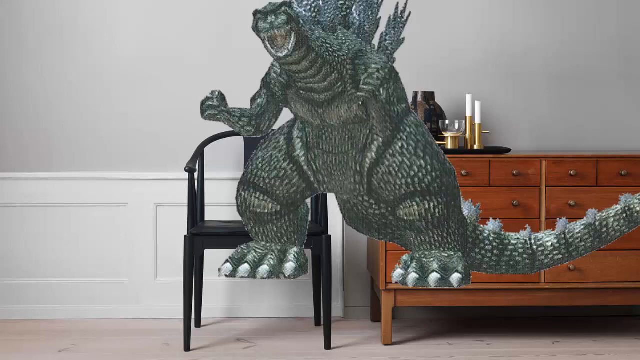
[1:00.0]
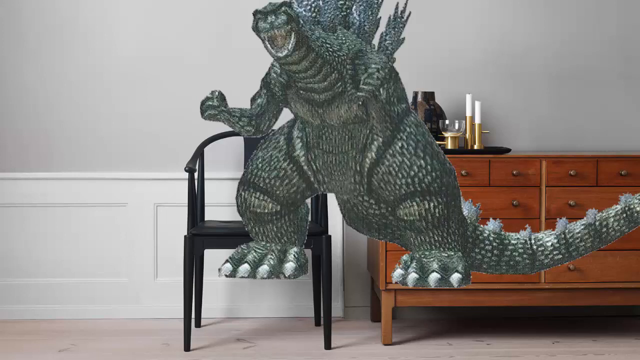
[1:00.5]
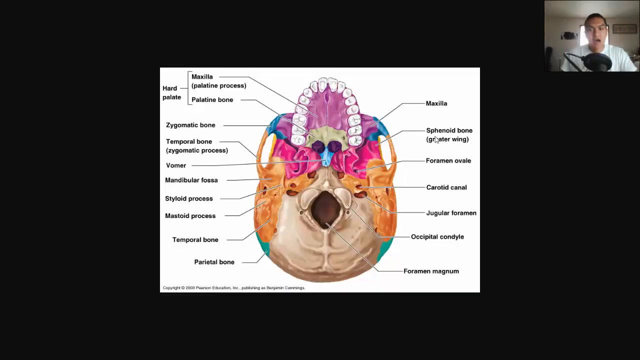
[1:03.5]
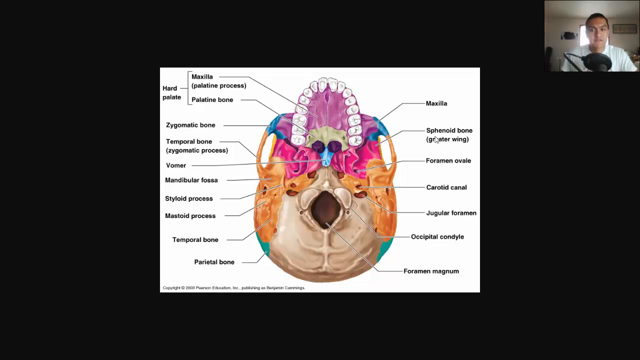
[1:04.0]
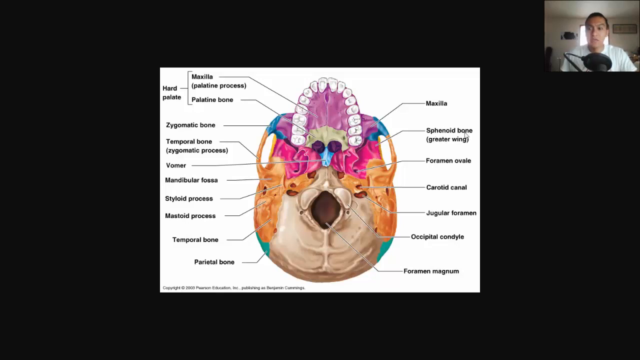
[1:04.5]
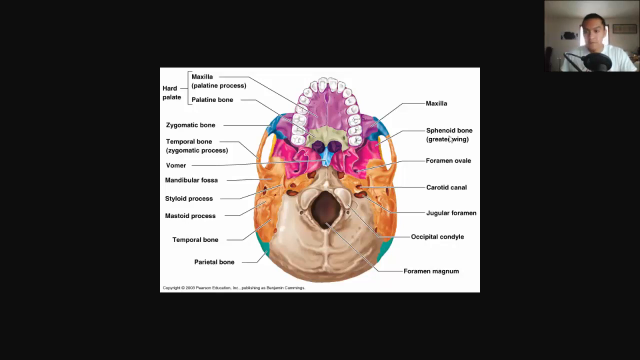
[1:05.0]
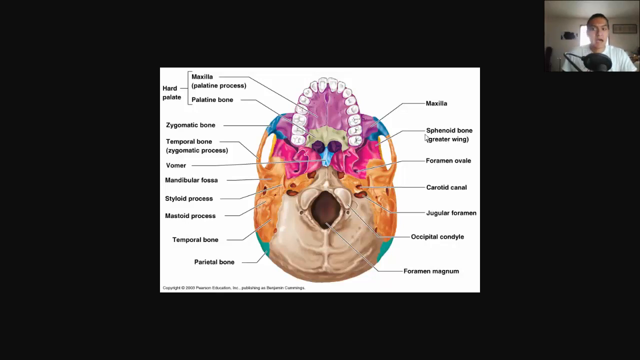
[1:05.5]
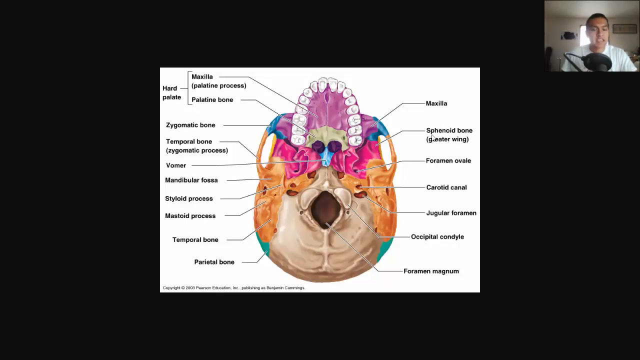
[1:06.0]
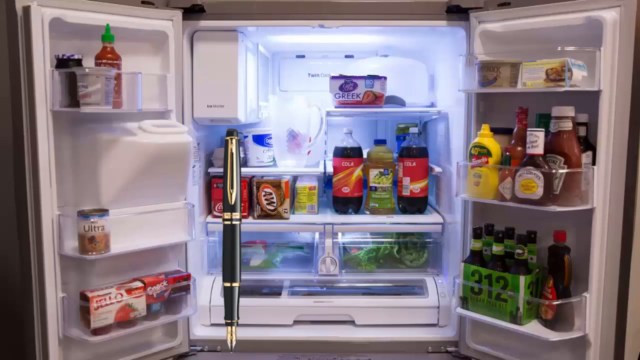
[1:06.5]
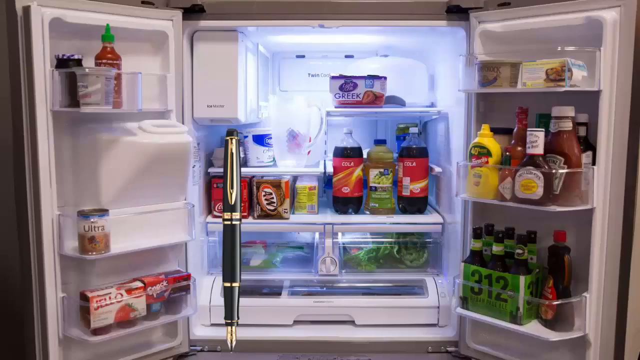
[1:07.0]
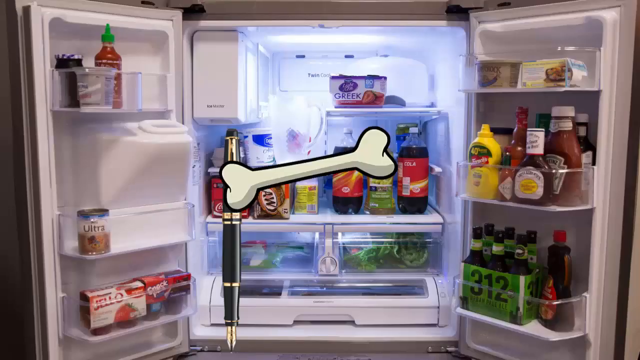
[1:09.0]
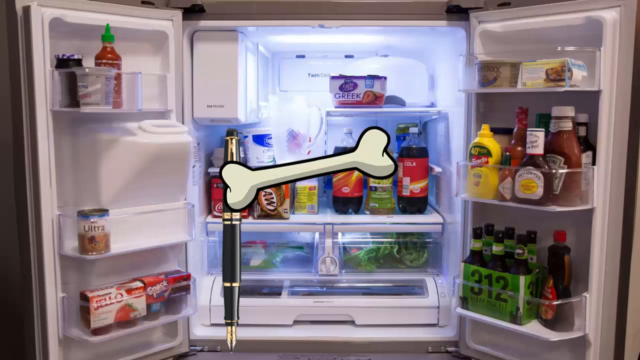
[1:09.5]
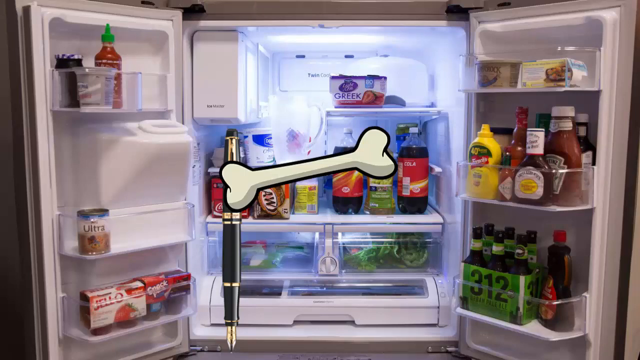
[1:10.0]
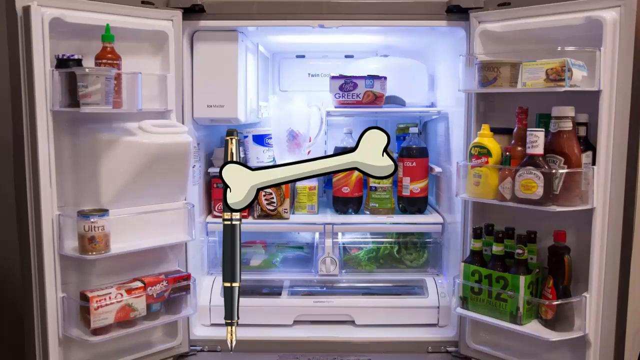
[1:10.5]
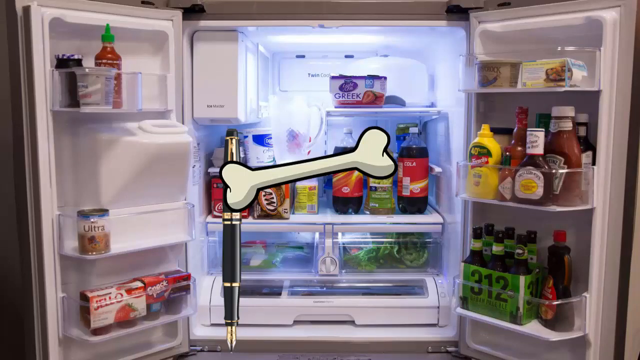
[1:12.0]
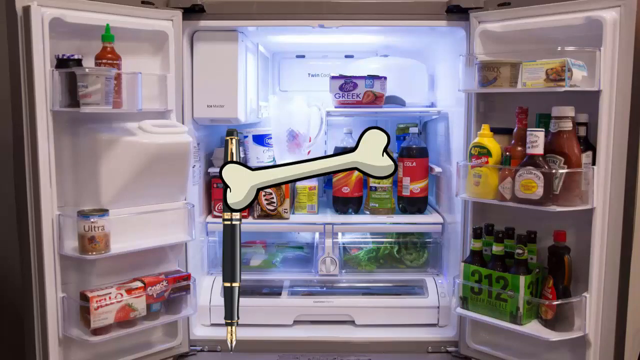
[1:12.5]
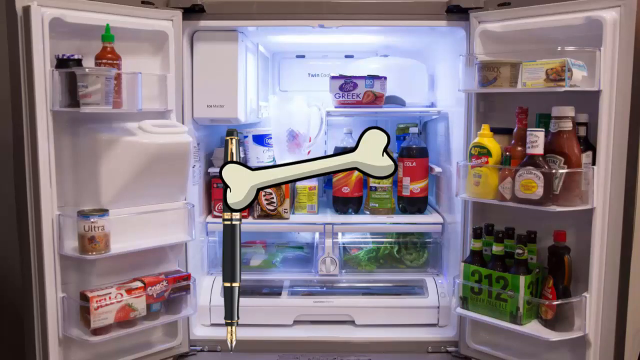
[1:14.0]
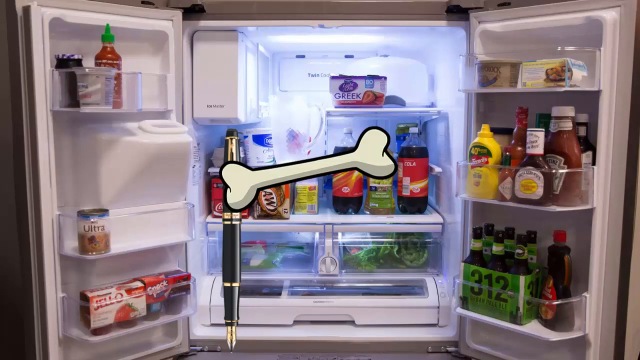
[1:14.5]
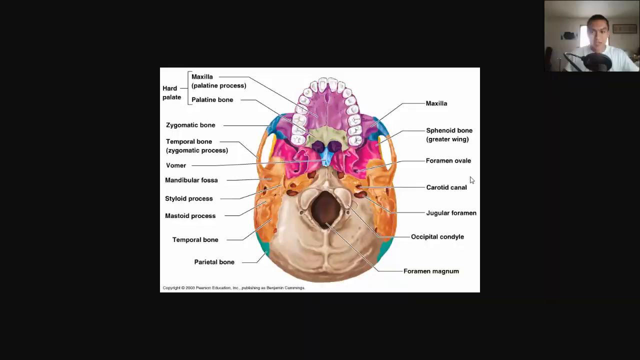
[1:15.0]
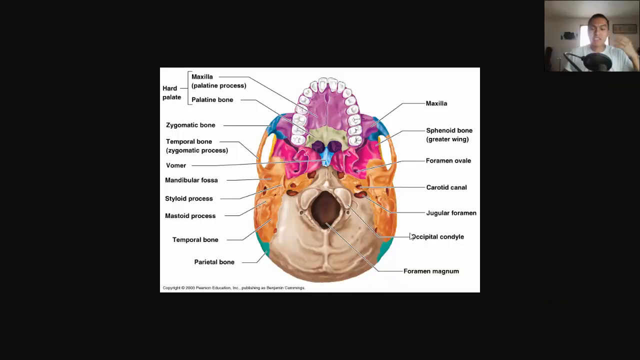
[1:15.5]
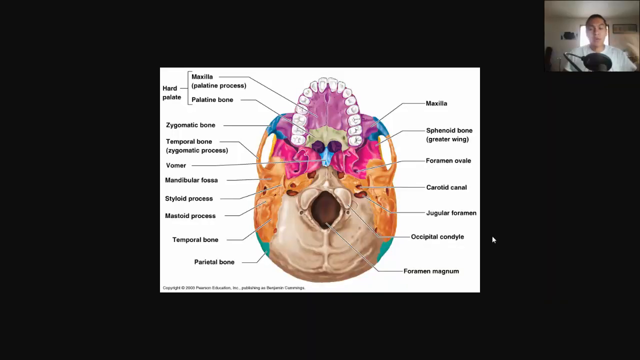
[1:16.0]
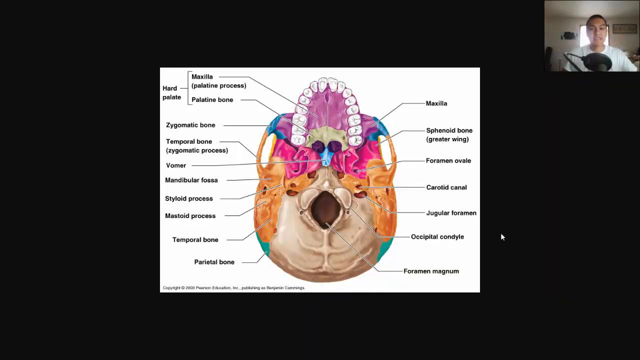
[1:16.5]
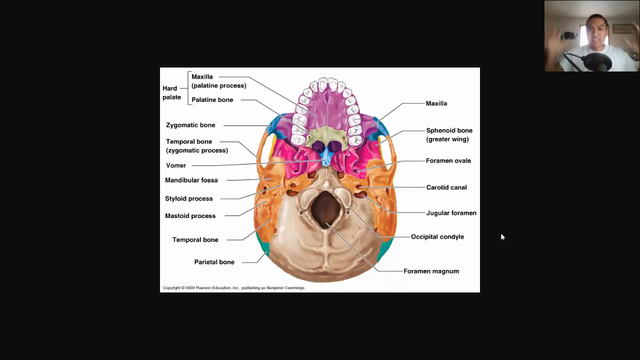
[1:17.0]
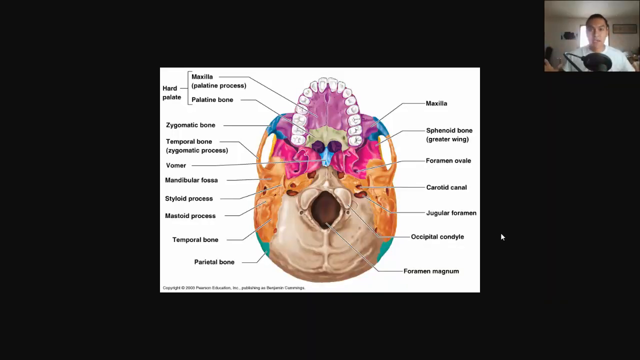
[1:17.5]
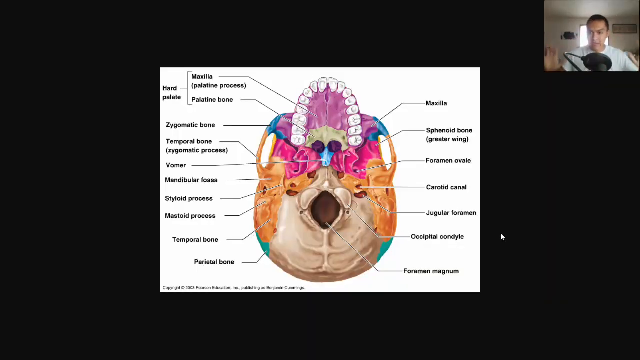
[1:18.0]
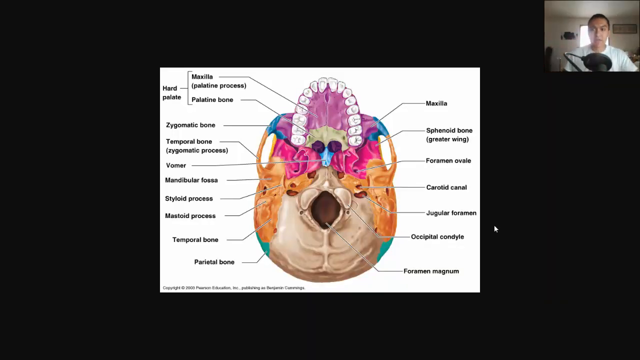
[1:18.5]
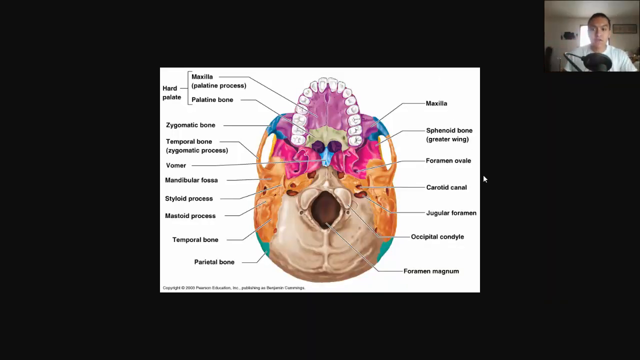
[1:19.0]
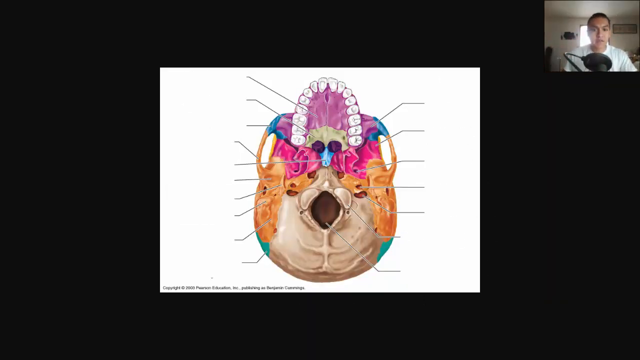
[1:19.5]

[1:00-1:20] The big Godzilla image in the same room stays on screen. The view then returns to the default layout, with the man in a facecam in the top right and the picture of the bottom of the skull in the middle. It quickly switches to another picture showing a completely open refrigerator with two flaps on the left and right that open for smaller things like condiments and syrup. A black and gold pen image apparently floats in front of it. A bone appears at the top of the pen, running horizontally and attached to the pen.